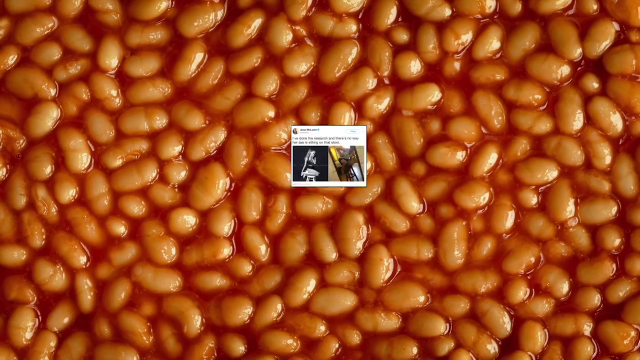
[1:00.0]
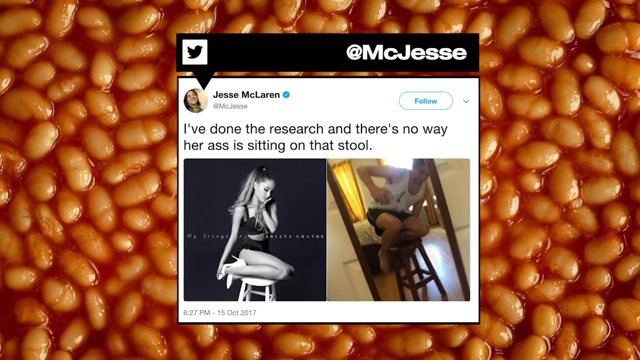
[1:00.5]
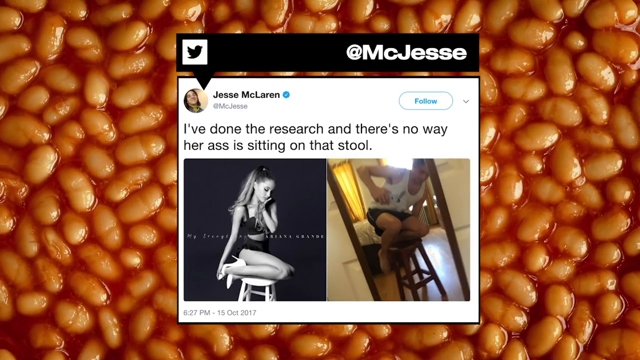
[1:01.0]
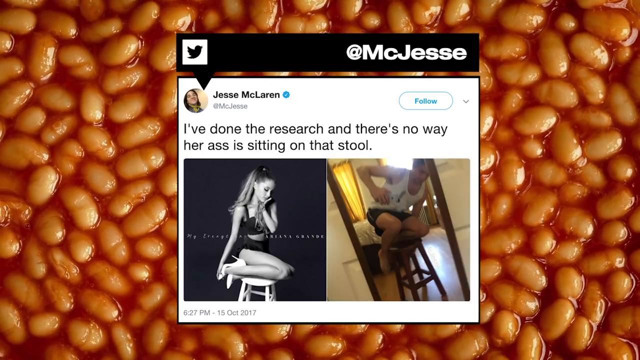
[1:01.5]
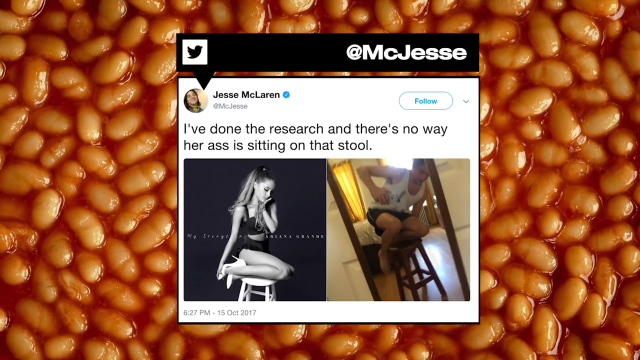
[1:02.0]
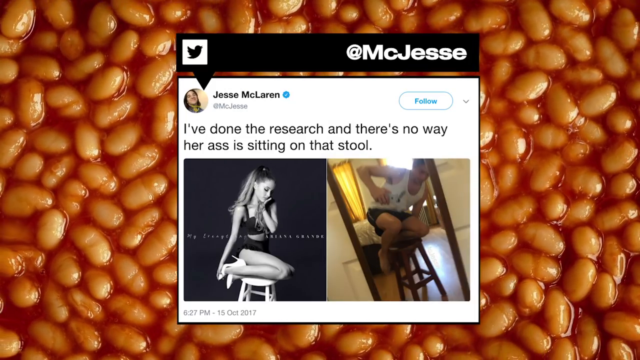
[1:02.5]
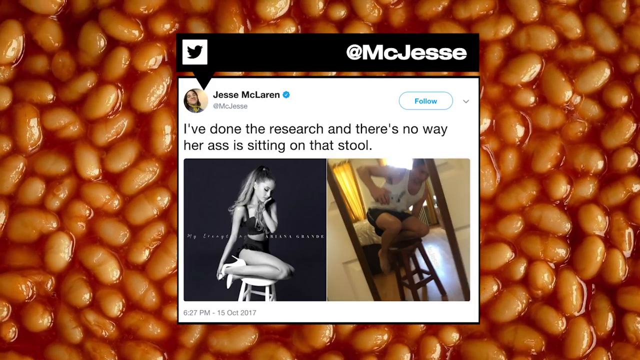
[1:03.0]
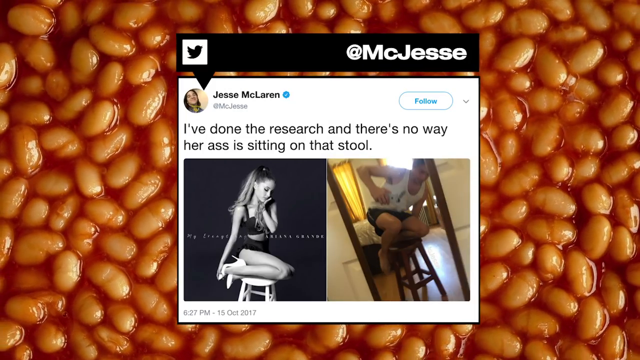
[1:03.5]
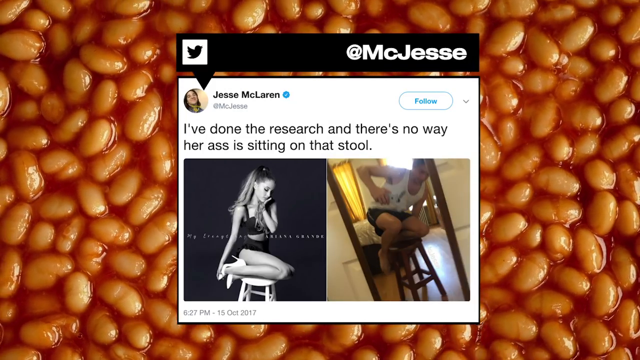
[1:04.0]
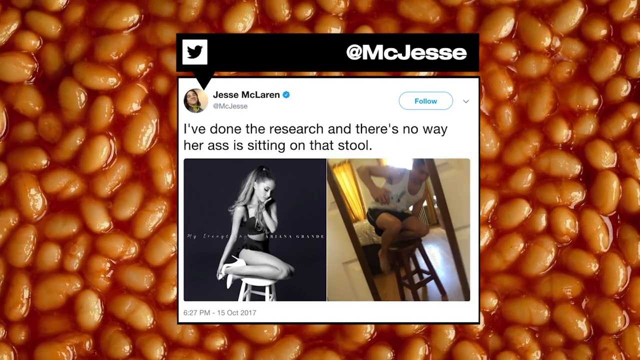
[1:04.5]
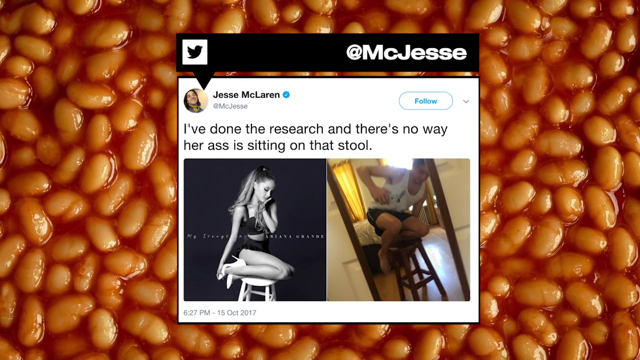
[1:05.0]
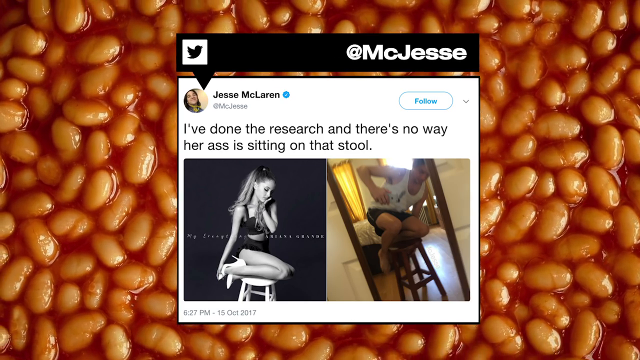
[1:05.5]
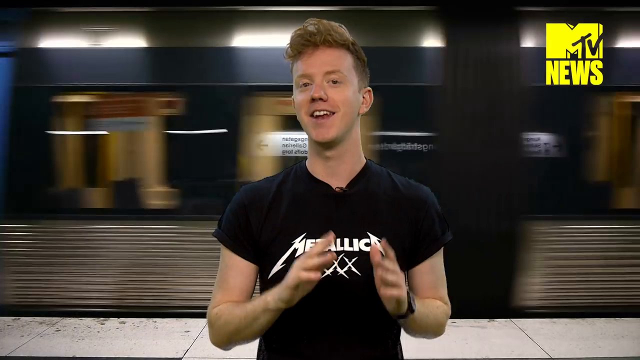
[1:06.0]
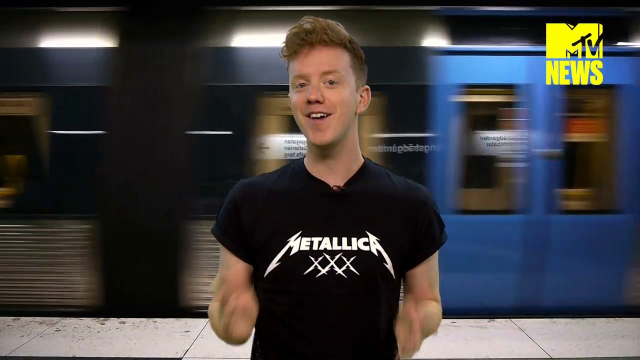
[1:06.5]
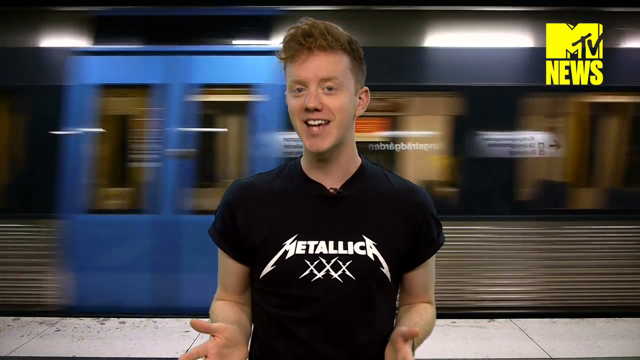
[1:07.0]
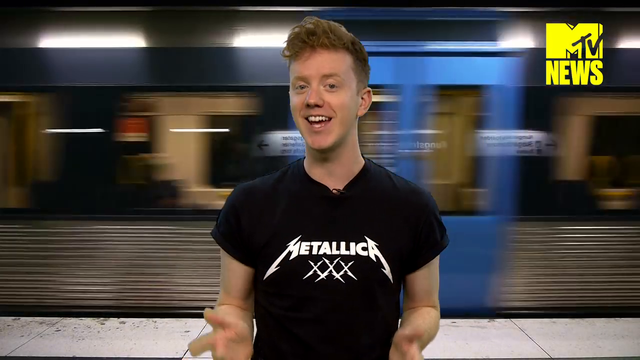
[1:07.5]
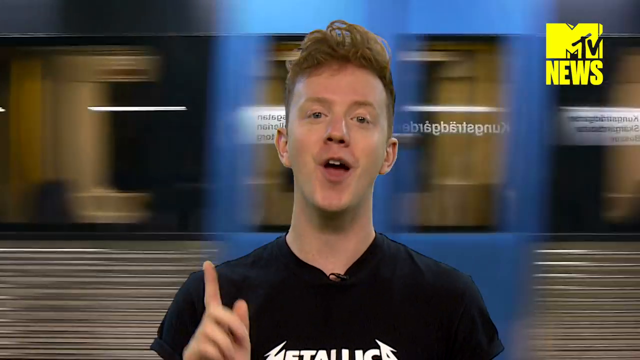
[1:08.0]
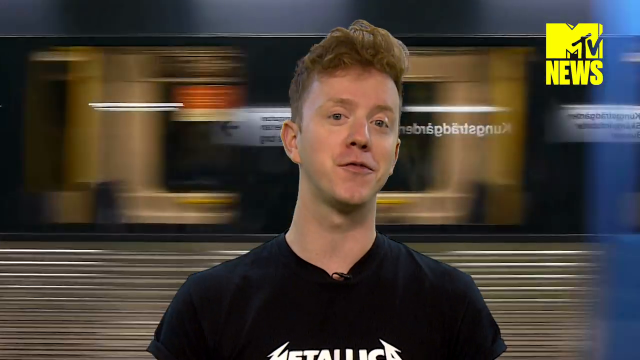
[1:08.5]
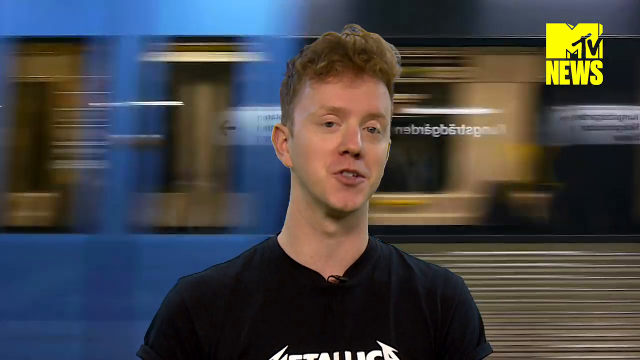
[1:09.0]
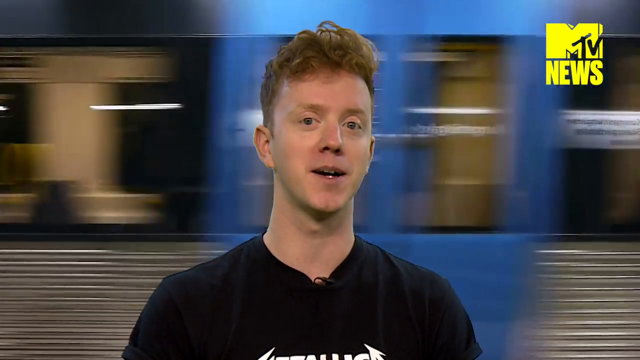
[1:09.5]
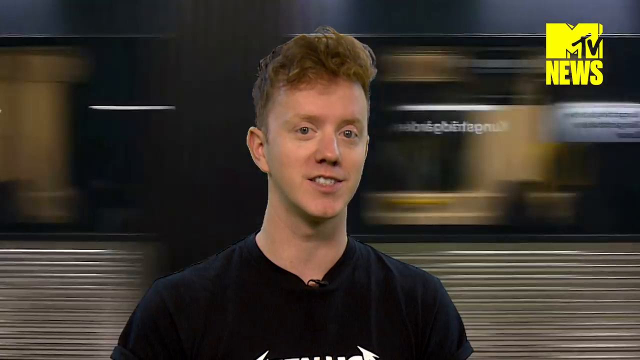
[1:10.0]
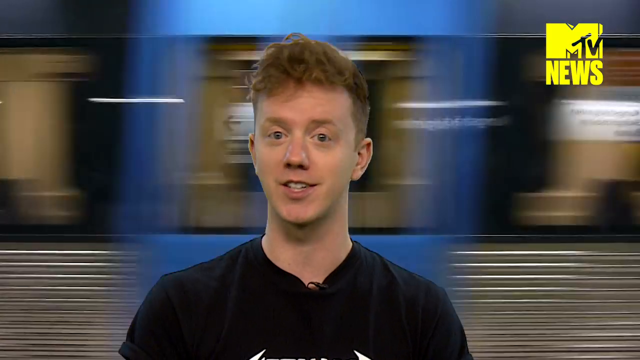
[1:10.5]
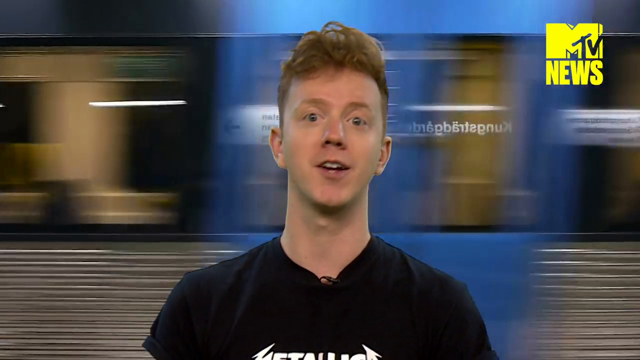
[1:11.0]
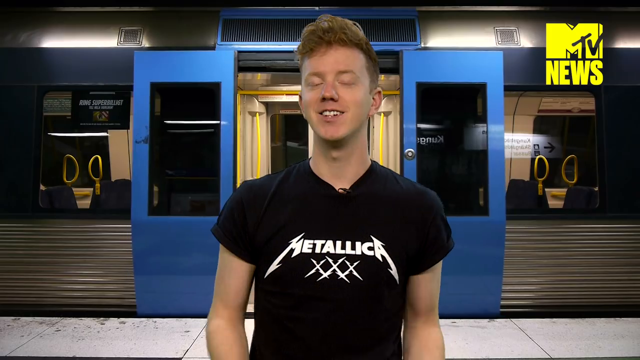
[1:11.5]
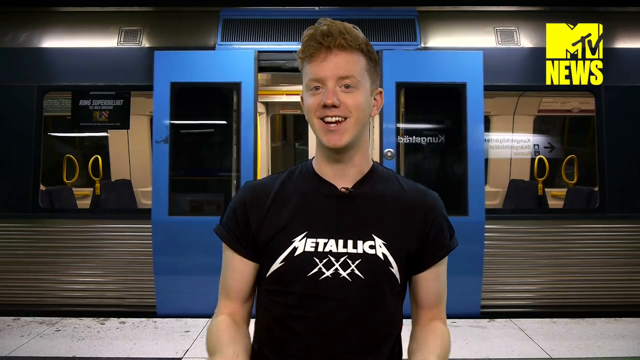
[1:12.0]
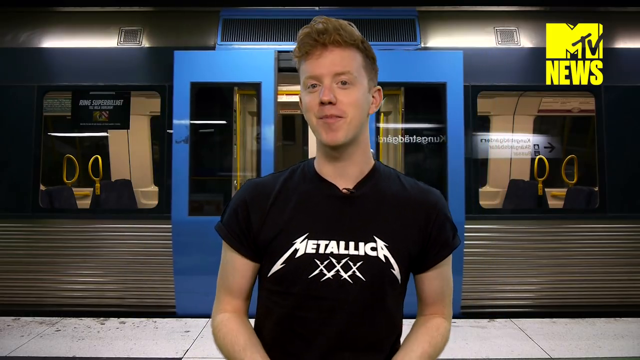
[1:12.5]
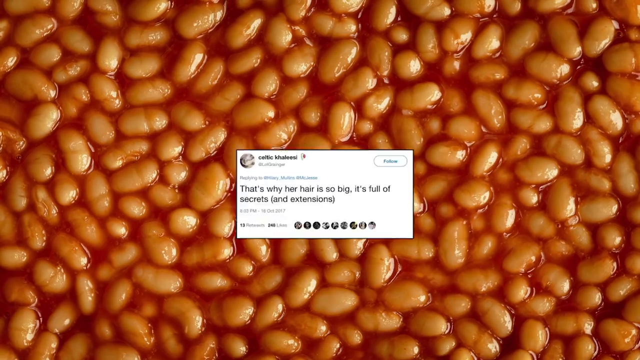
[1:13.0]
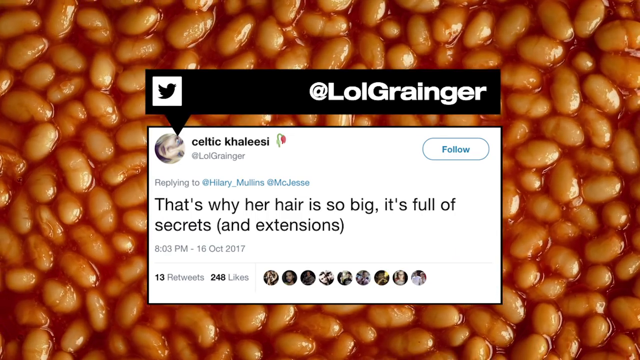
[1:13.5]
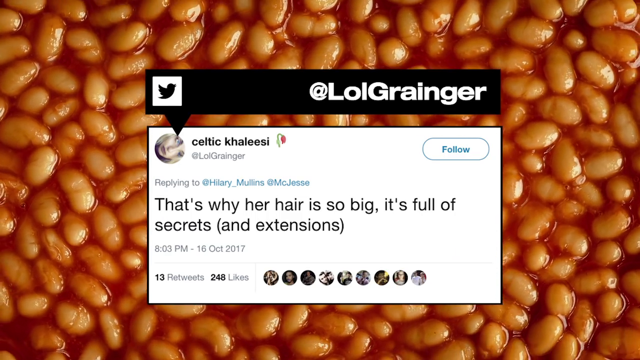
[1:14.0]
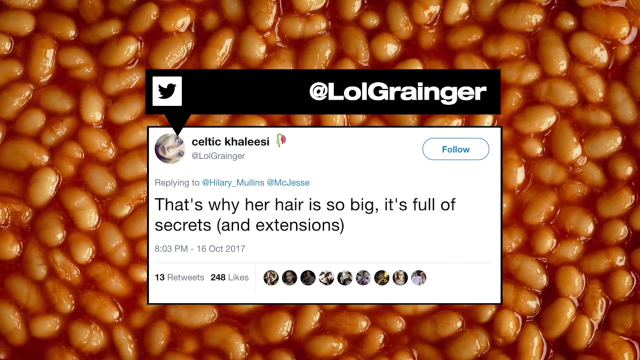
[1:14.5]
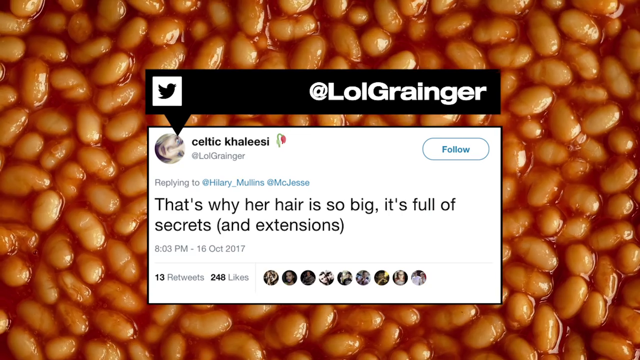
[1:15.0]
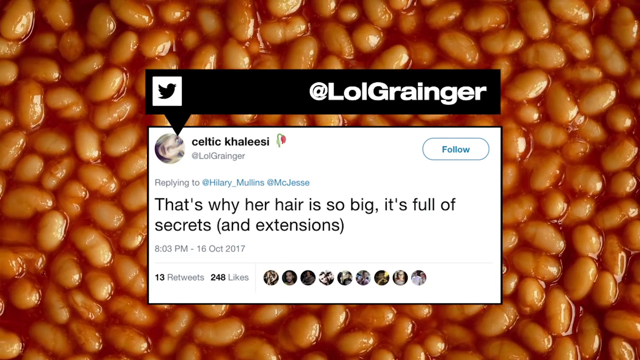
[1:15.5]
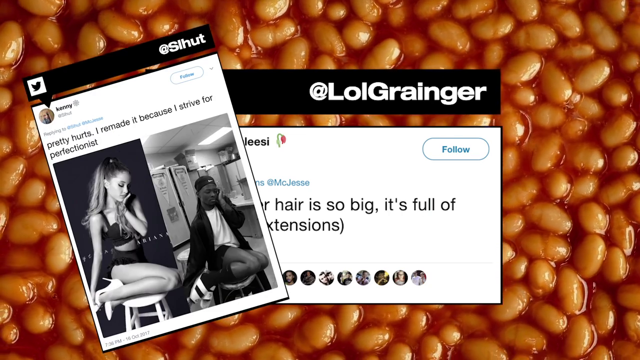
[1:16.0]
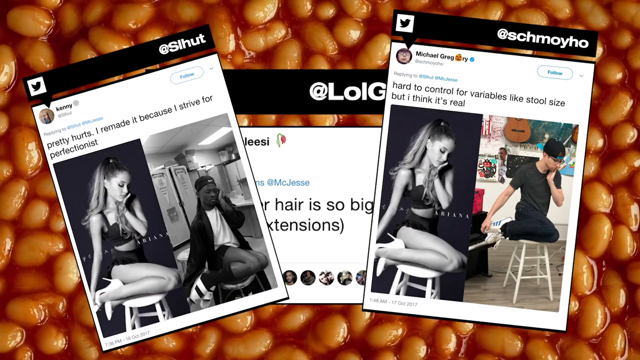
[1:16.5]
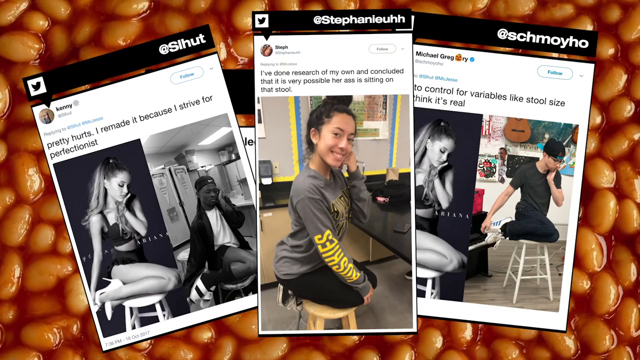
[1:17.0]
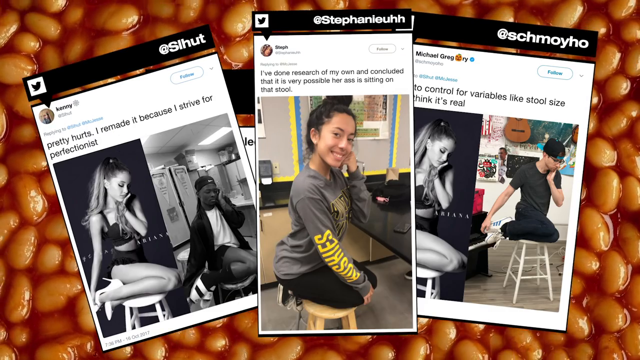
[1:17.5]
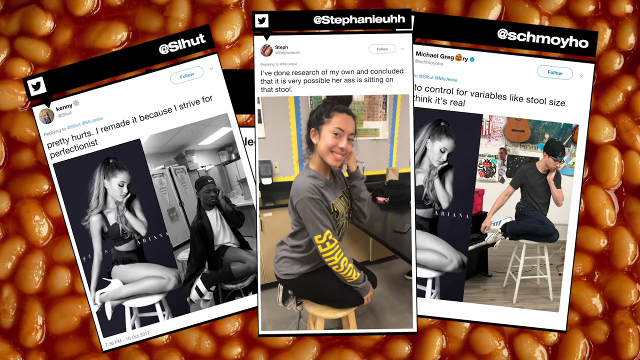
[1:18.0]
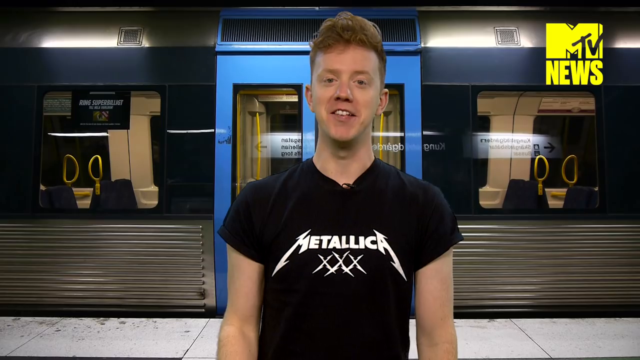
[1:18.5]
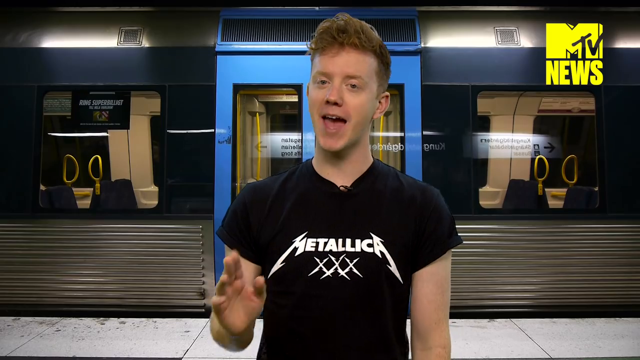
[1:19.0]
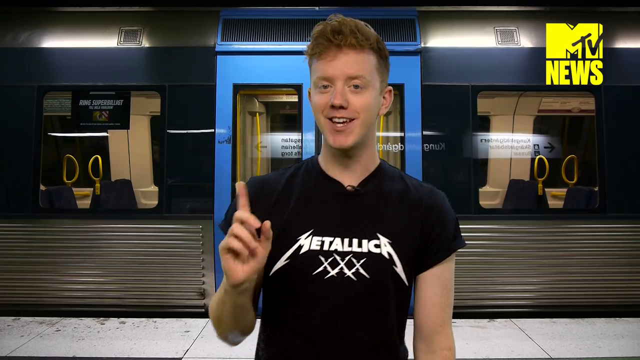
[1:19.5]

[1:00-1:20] A screen shows a Twitter post from Jessie McLaren that says "I've done the research and there's no way her ass is sitting on that stool," with beans in the background. The post concerns the picture of Ariana Grande kneeling on her knees on the stool in an unconventional way, and shows this person trying to do the same pose without success. The video returns to the Caucasian man, between 20 and 25, with short reddish-brown hair, in the black shirt with Metallica text and three white X's. A train is now moving behind him, and a yellow MTV logo reading "MTV News" is visible in the top right corner. At the very start, the train behind him shows two doors kind of closing.